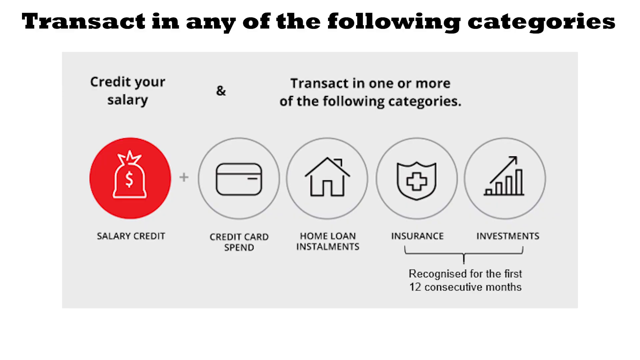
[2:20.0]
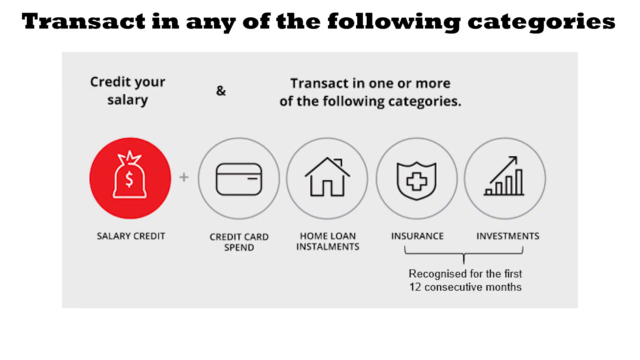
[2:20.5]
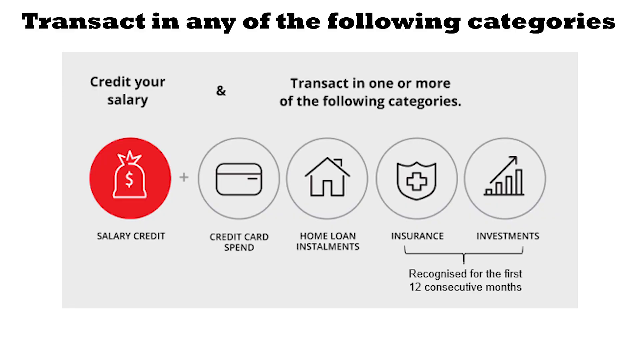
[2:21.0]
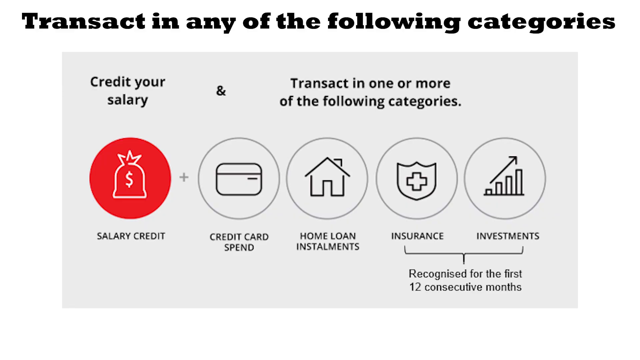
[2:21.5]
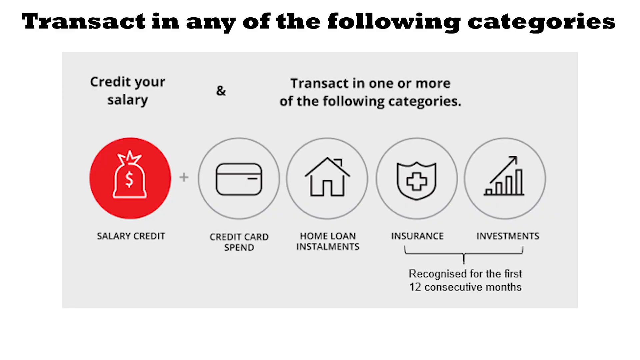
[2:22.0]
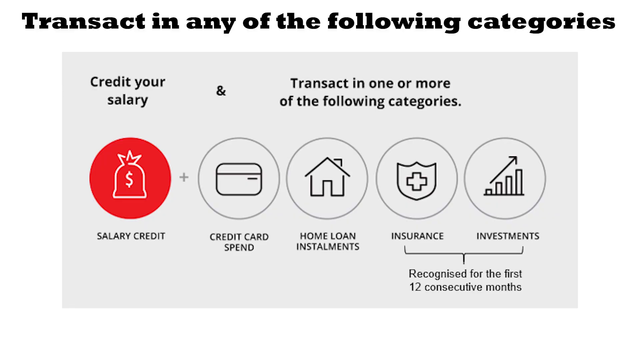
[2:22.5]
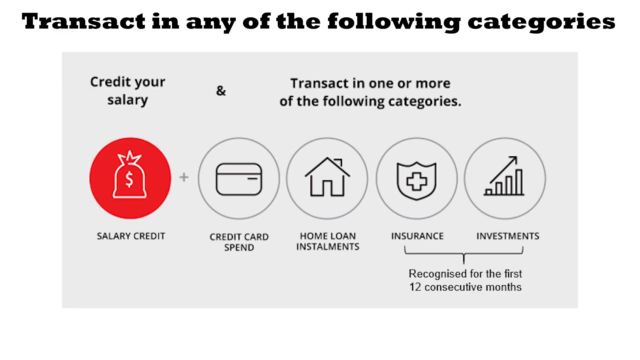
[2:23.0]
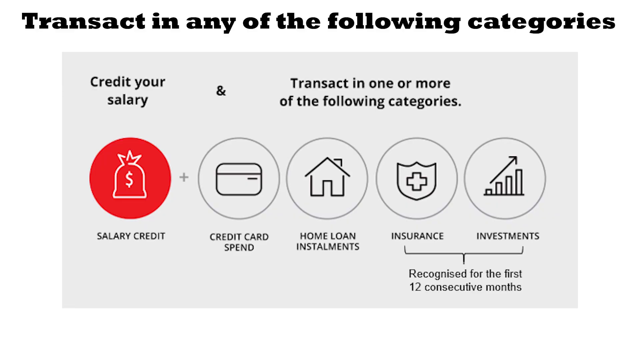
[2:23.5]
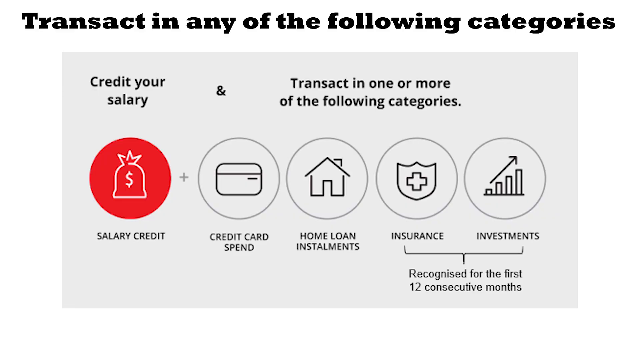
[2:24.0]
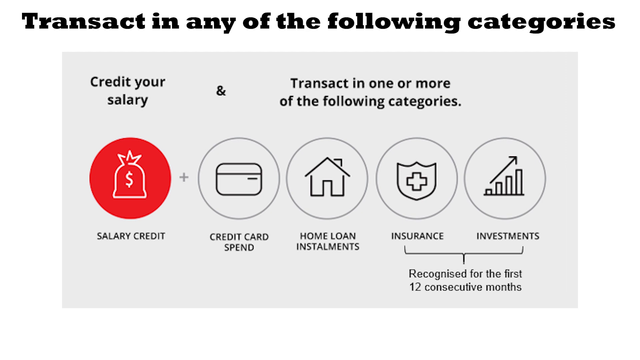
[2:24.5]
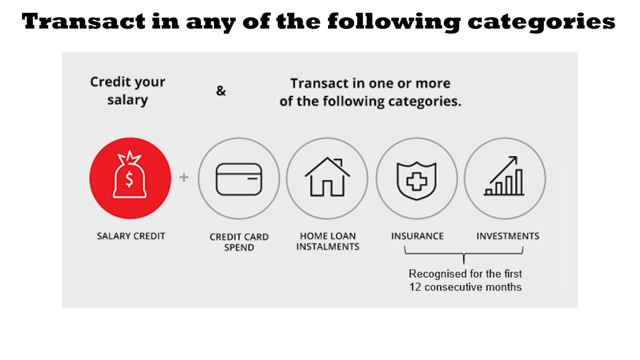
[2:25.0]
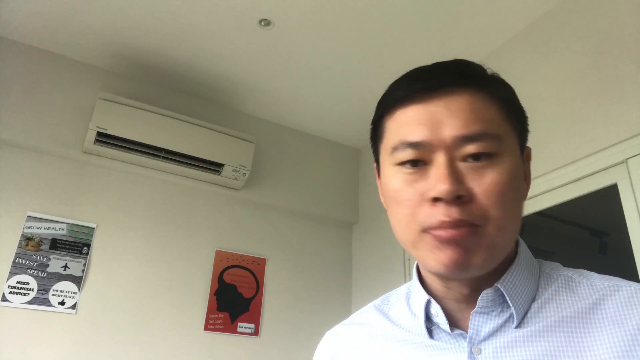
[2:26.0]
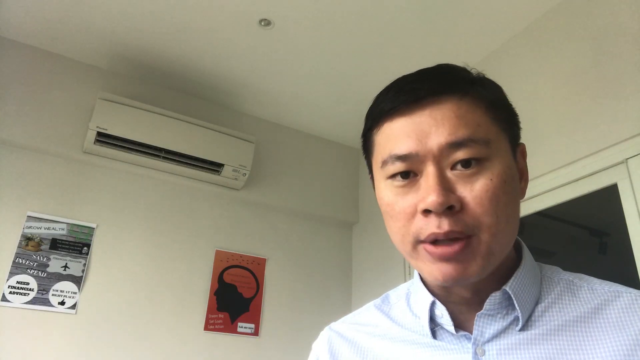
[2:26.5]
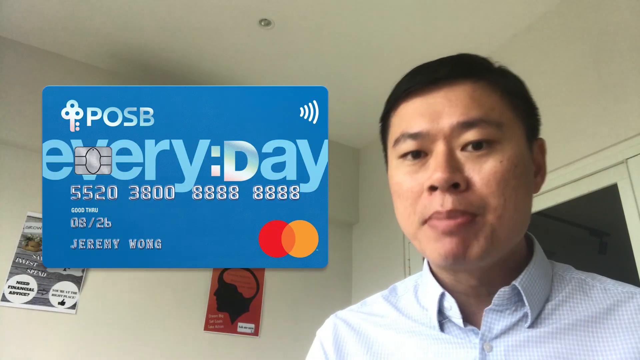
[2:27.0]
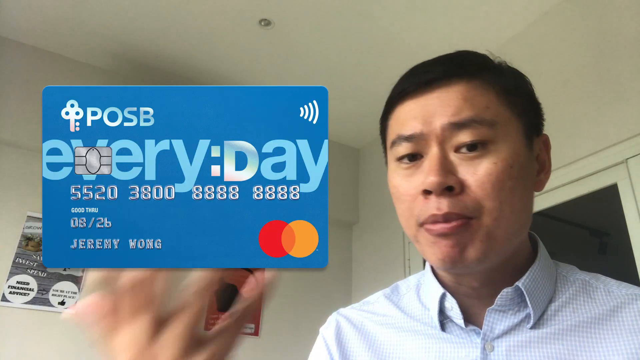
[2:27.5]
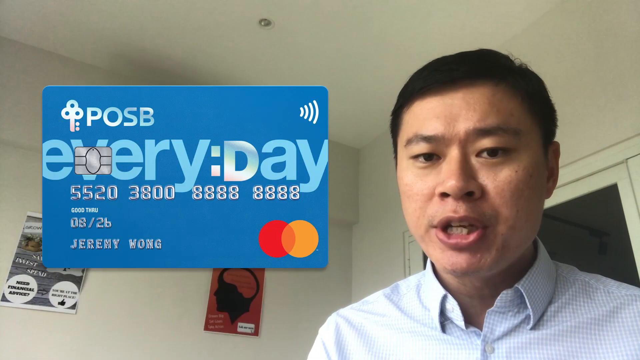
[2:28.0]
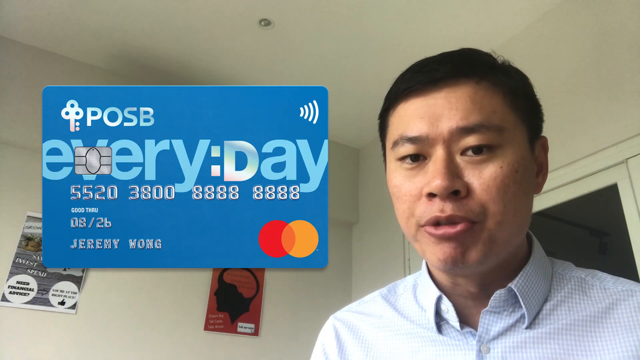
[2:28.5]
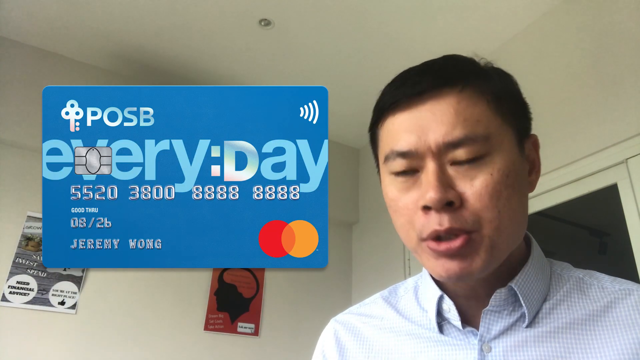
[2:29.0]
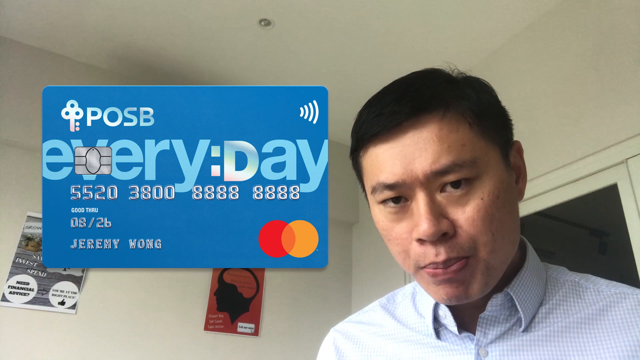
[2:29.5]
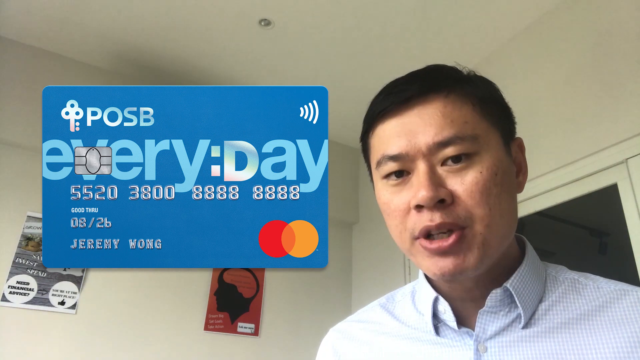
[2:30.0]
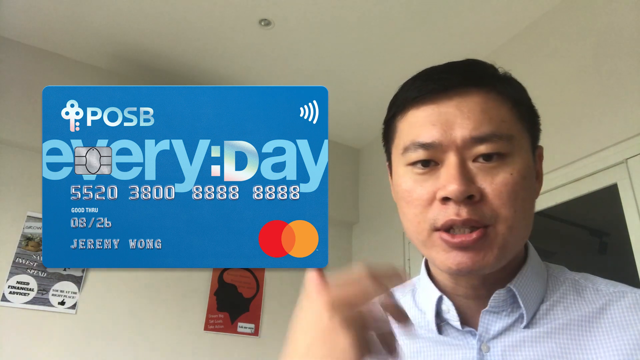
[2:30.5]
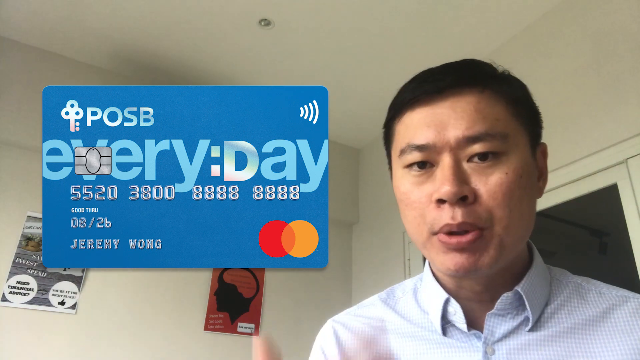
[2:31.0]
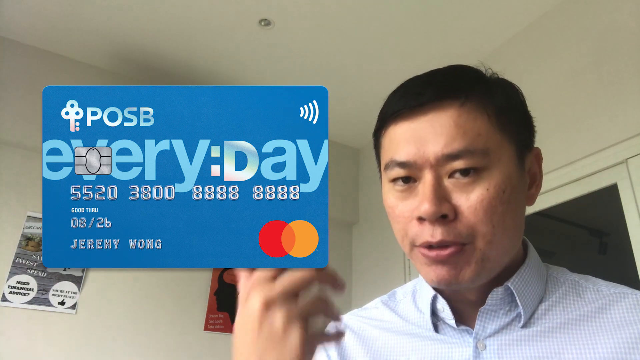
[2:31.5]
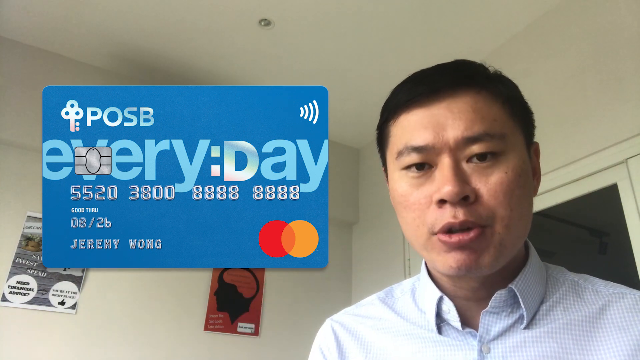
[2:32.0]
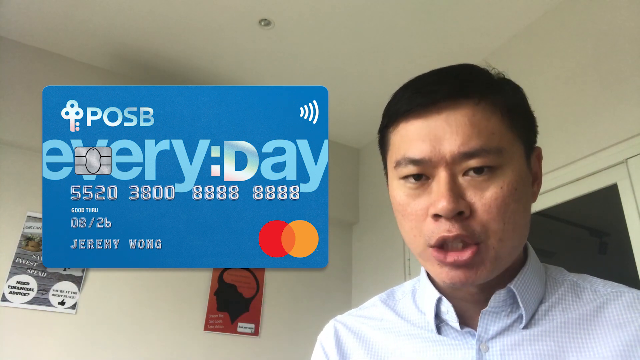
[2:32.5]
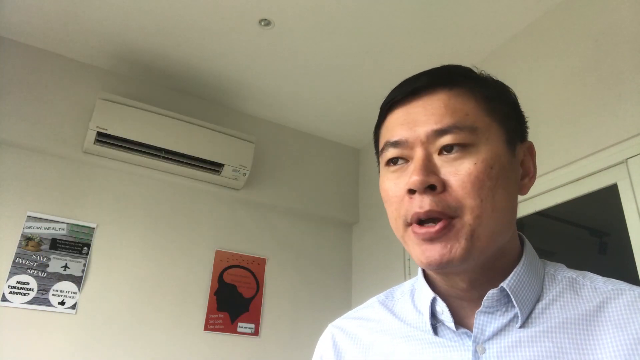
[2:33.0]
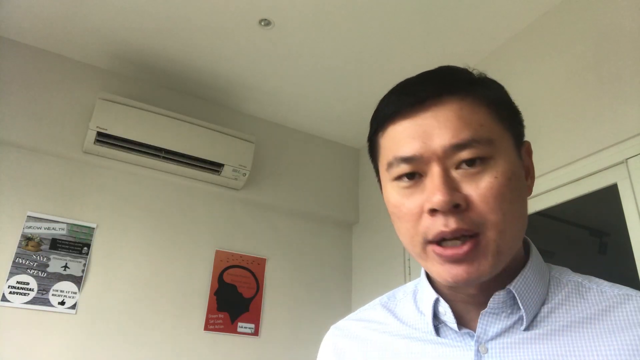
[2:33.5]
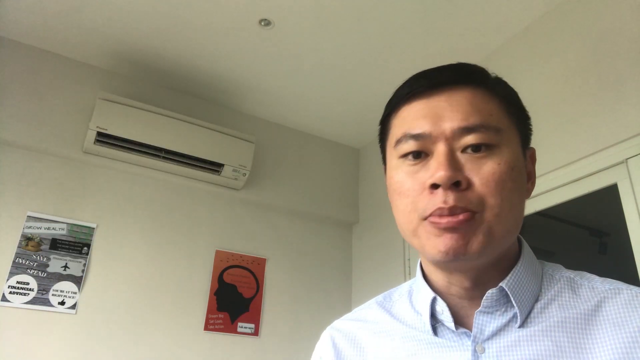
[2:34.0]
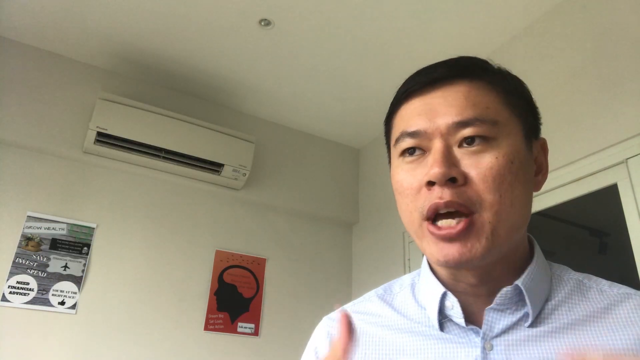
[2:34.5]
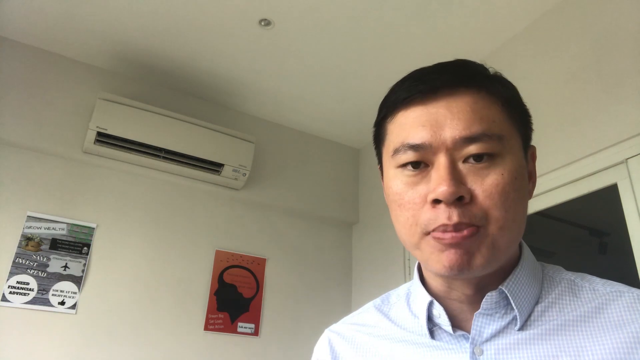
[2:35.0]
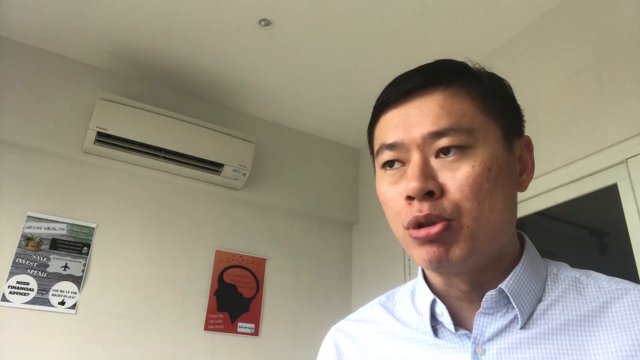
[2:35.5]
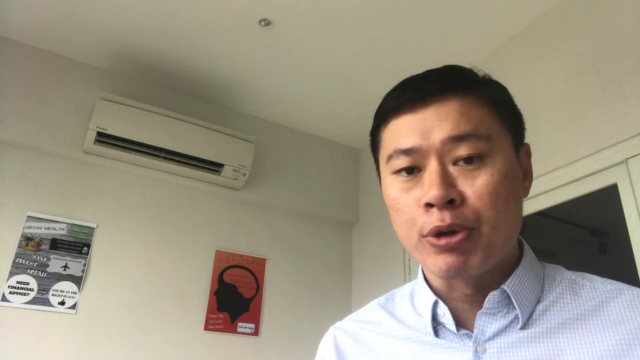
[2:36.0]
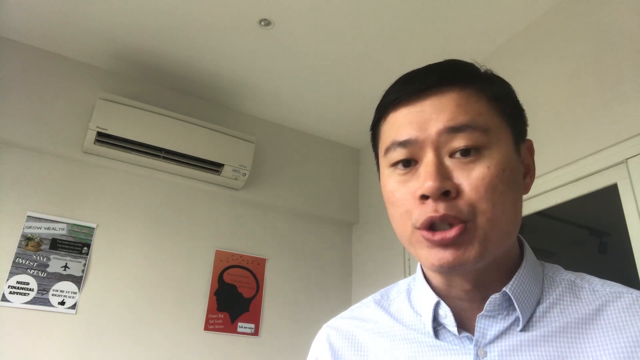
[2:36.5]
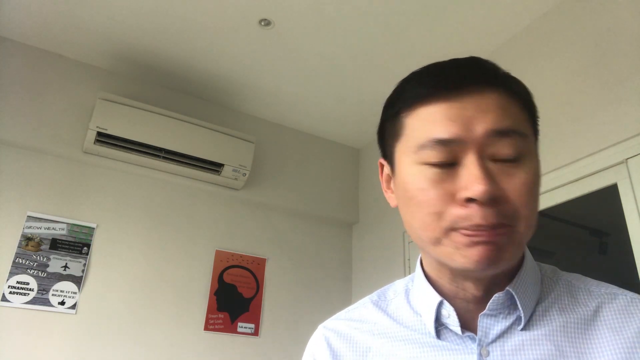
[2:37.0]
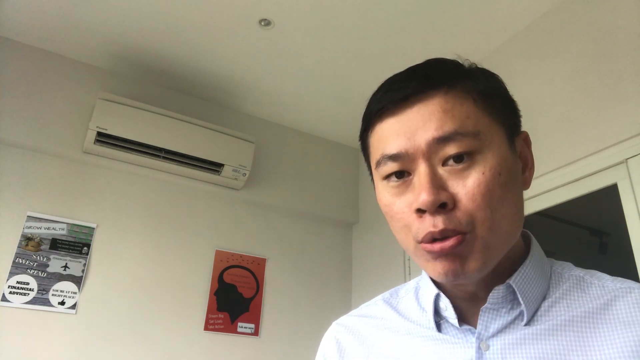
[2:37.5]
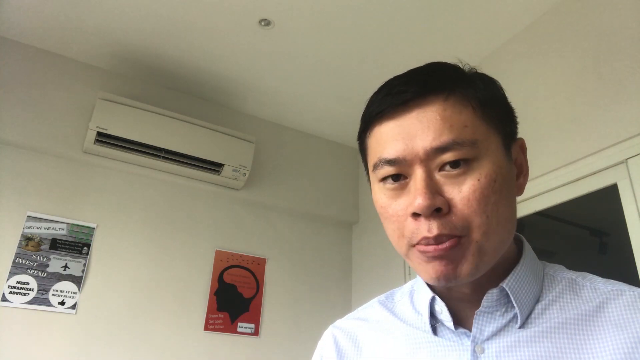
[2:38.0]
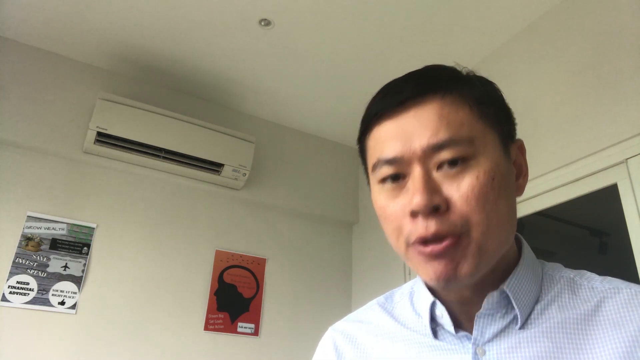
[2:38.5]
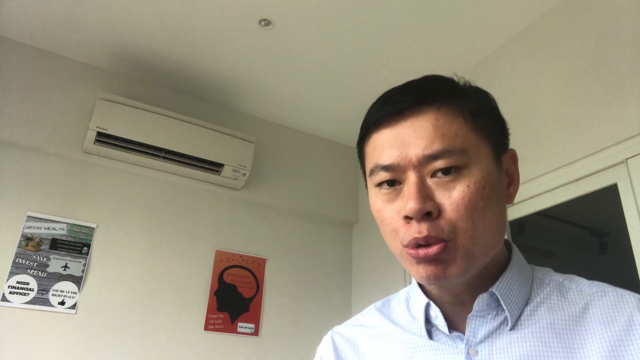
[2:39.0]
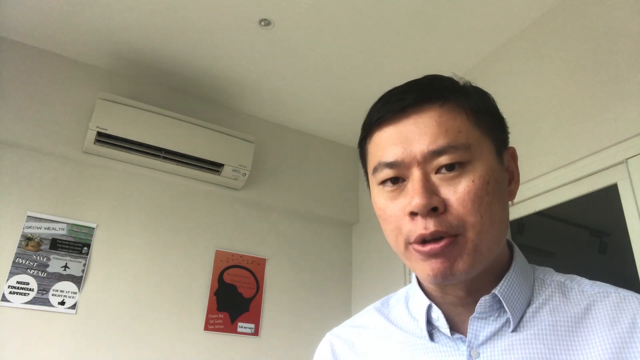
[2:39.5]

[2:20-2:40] Another graphic organizer appears, with text at the top about transacting in categories and a grayish rectangular box. At the top left it says "credit your salary", then moving over there is an "&" symbol, and then "transacted one or more of the following categories". Under "credit your salary" is a red circle with a money bag and a white outline, with "salary credit" underneath, followed by a plus. Between this red circle and the next is a translucent circle with a credit card emoji labeled "credit card spend". There is also a home, a shield for insurance, and a bar graph for investment. A bracket under insurance and investment says "now recognized for the first 12 consecutive months". The video goes back to the man speaking, and a credit card floats on the left side of the frame. It says "POSB" and "everyday", with a little silver chip on the front, a 16-digit card number, the MasterCard symbol at the bottom right with orange and red circles, and the date and cardholder's name. The card goes away as he keeps talking, this time with nothing else on the screen, kind of tilting his head up and down and using his hands a little.